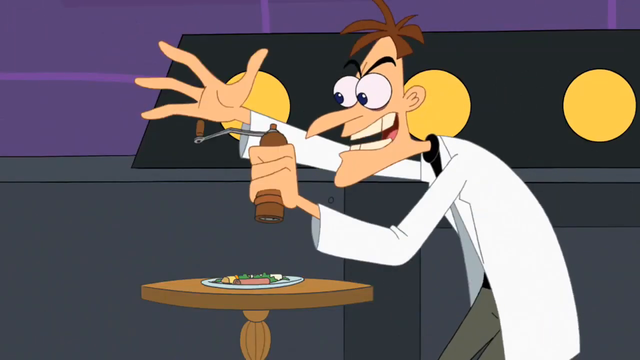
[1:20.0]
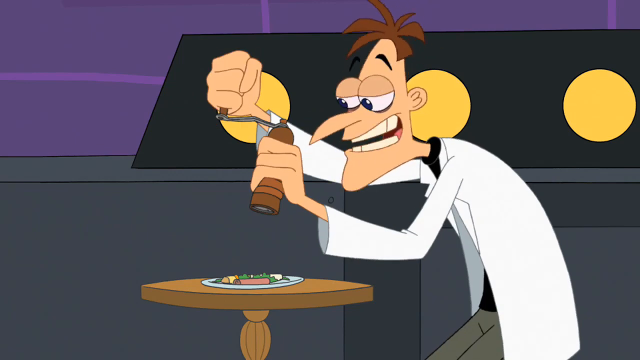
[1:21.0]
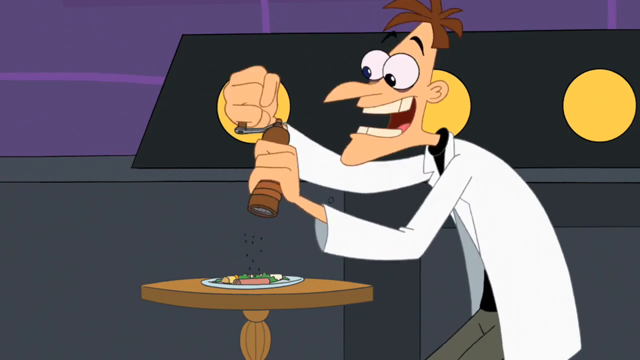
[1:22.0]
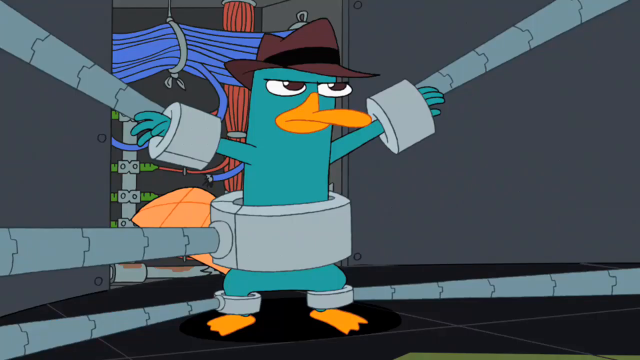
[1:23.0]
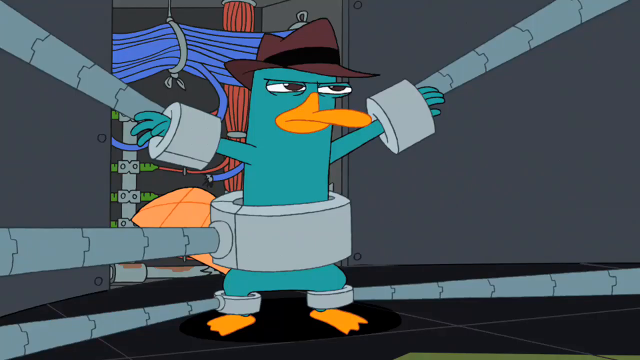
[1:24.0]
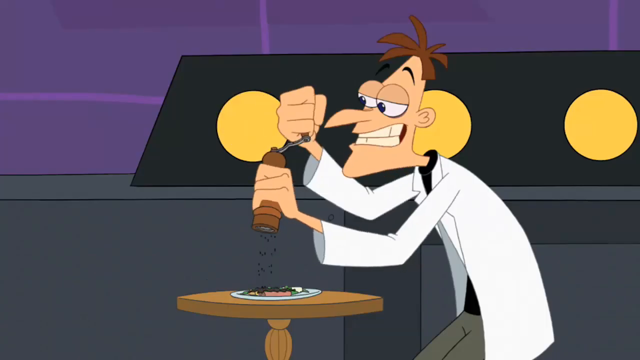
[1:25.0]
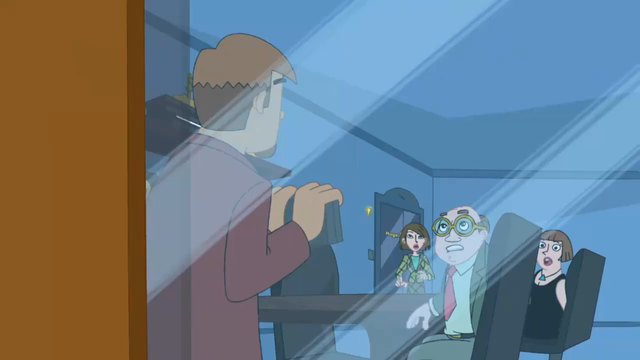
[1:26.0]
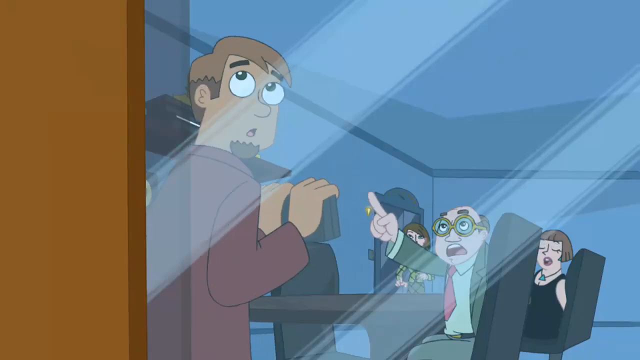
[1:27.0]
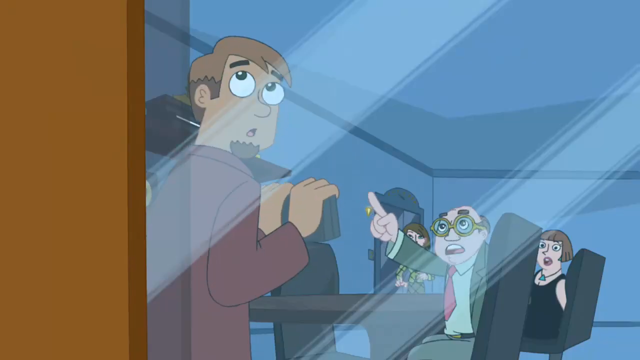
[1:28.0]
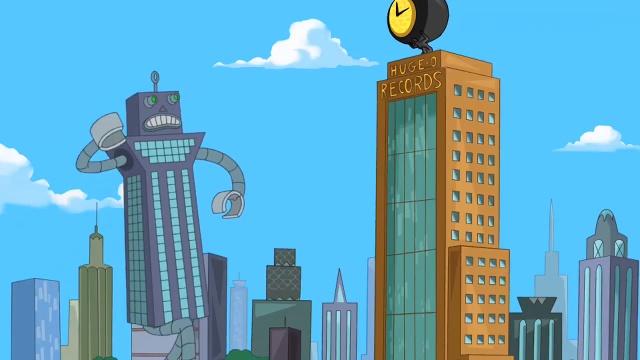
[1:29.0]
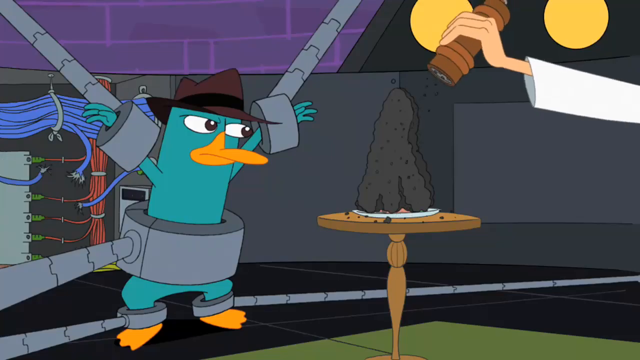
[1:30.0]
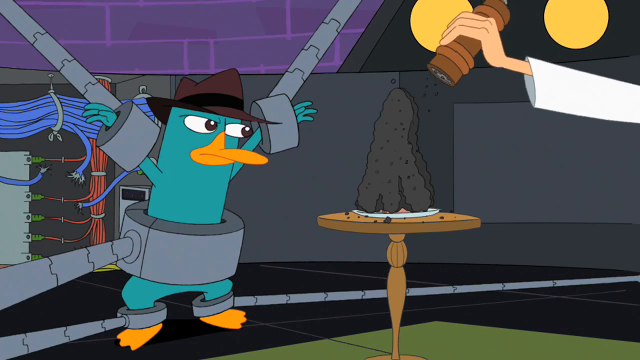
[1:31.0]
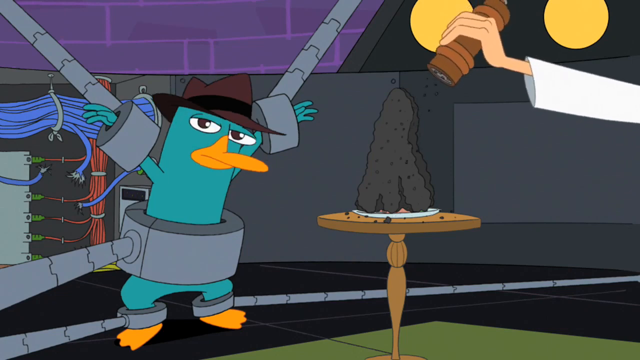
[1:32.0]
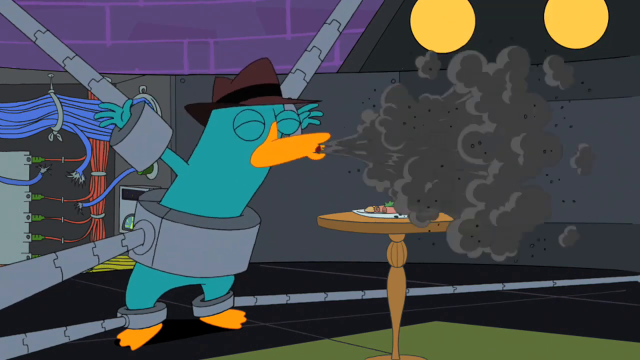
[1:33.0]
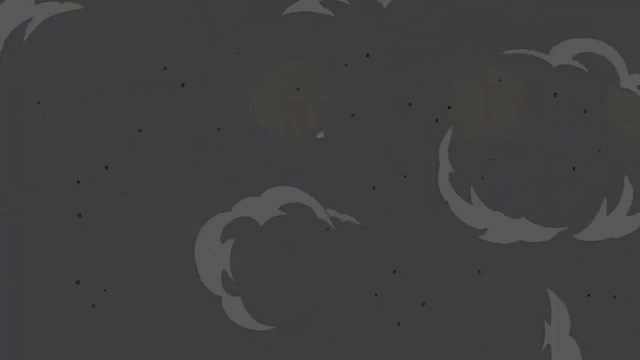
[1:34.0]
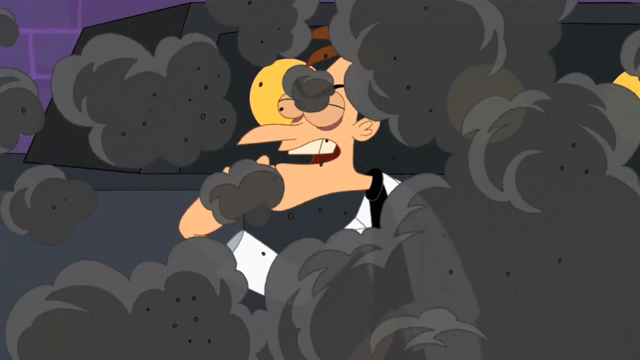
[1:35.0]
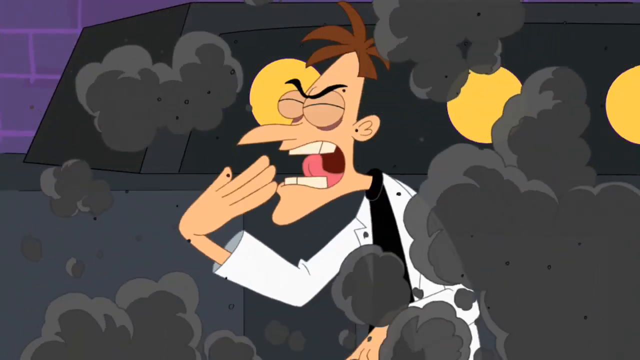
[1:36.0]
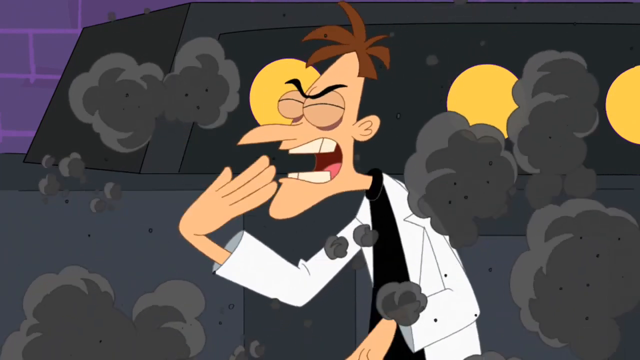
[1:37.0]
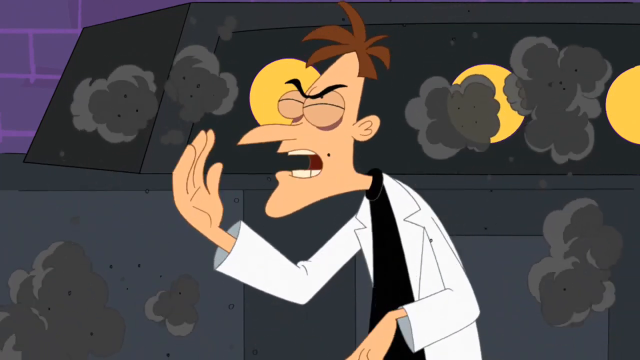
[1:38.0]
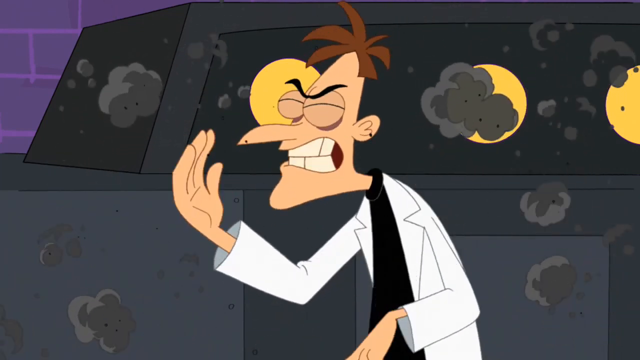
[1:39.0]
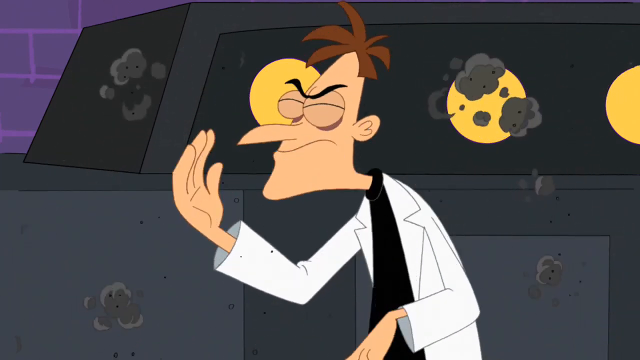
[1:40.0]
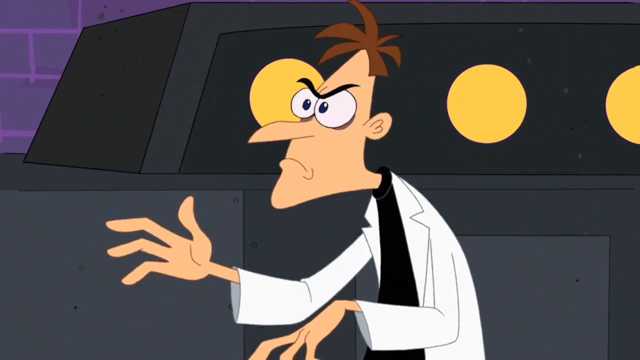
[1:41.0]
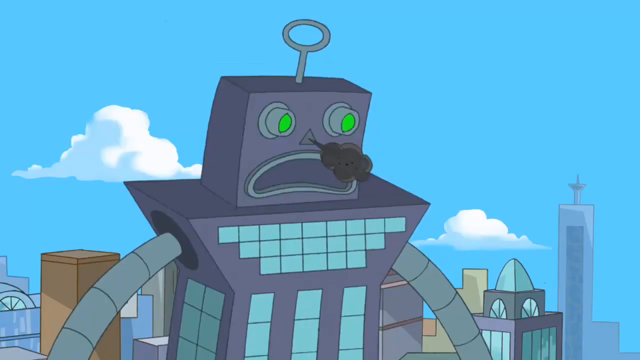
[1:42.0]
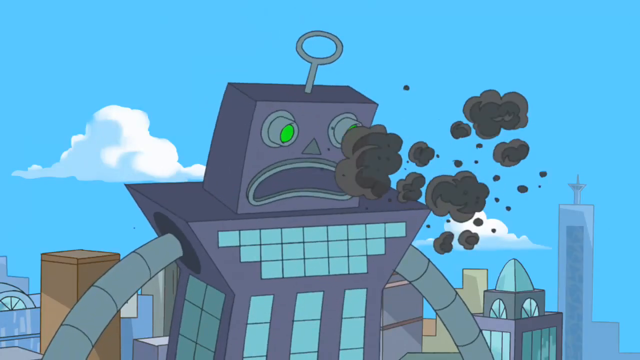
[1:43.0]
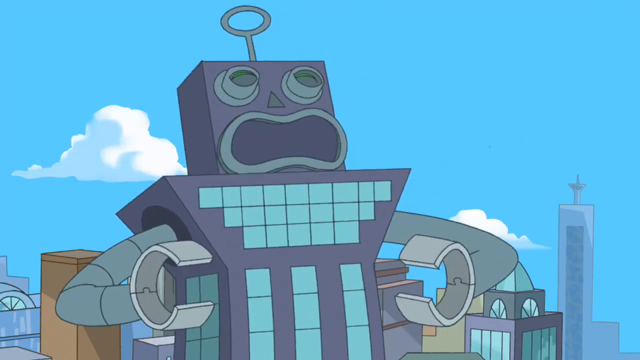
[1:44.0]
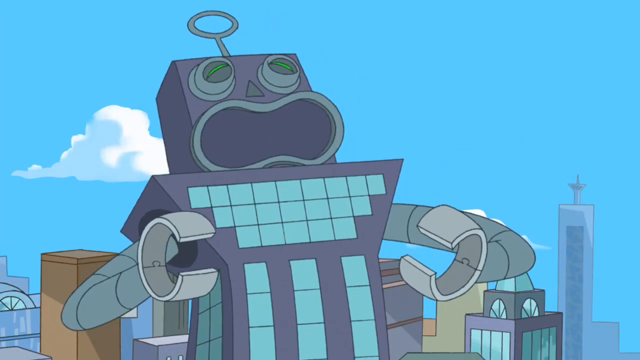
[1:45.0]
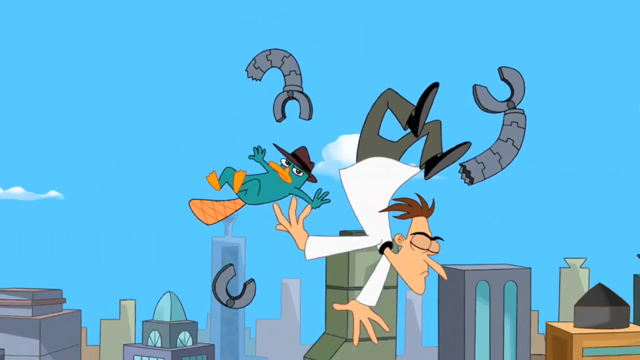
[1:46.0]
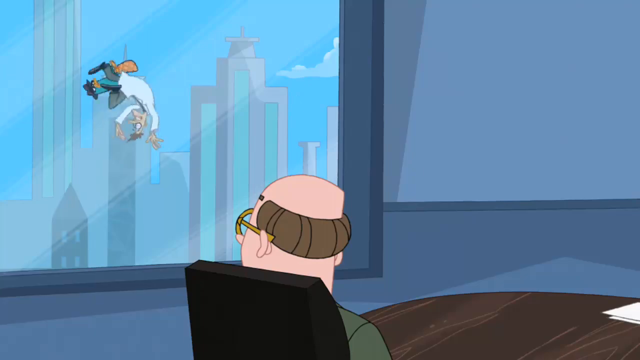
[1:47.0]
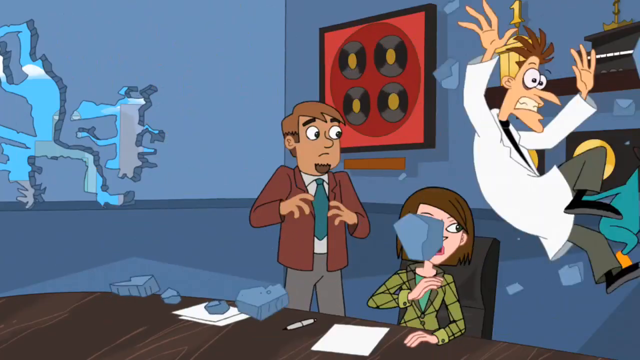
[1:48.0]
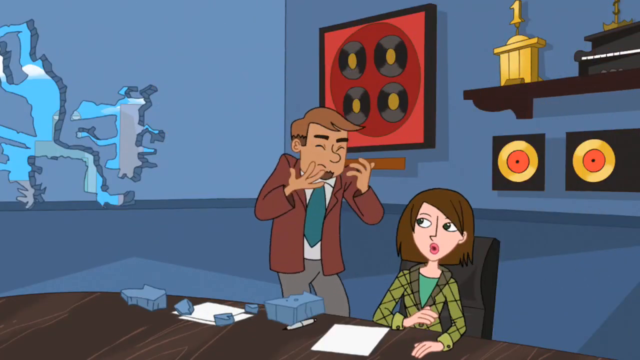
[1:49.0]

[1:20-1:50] The doctor prepares what looks to be a meal while the restrained hero watches. Using a classic pepper grinder, he puts an unrealistic amount of pepper on the food, which is unidentified and may be vegetables, or meat, or meat and cheese. He does this in front of the restrained hero, close enough for the hero to blow on the huge mountain of pepper now covering the entire plate. The pepper blows throughout the inside of the robot building, and apparently this causes the robot to malfunction: it starts to spark, shake and rattle, and it falters and tips over. The hero and the evil doctor go flying out of the building, soaring through the air.